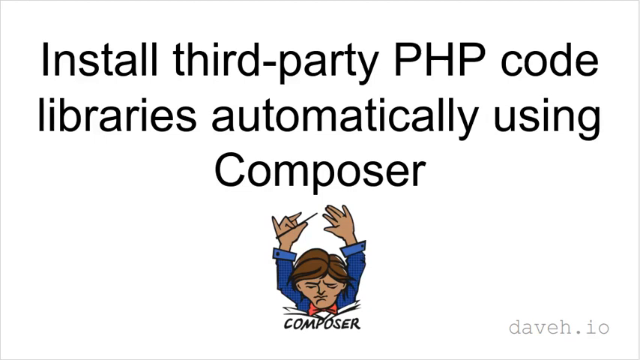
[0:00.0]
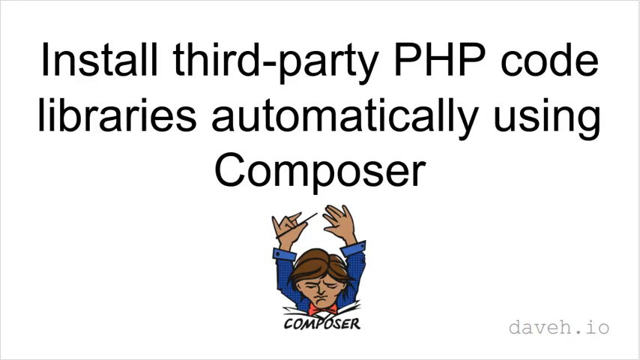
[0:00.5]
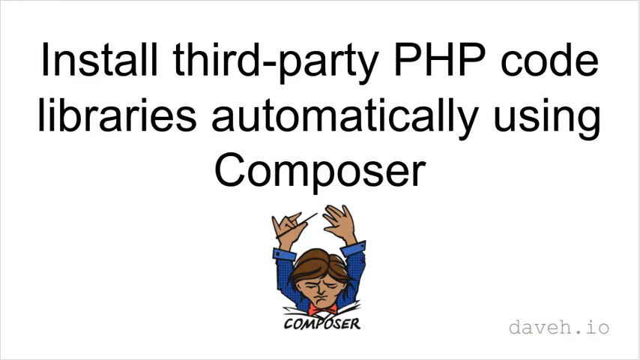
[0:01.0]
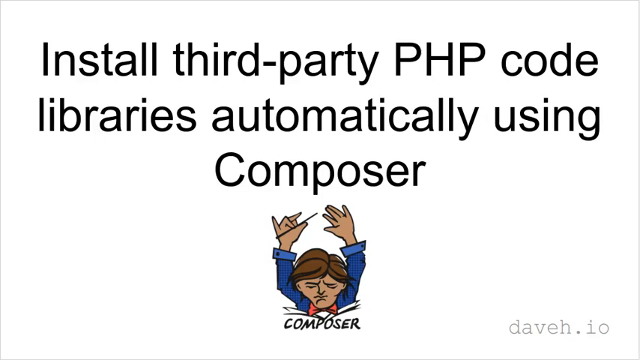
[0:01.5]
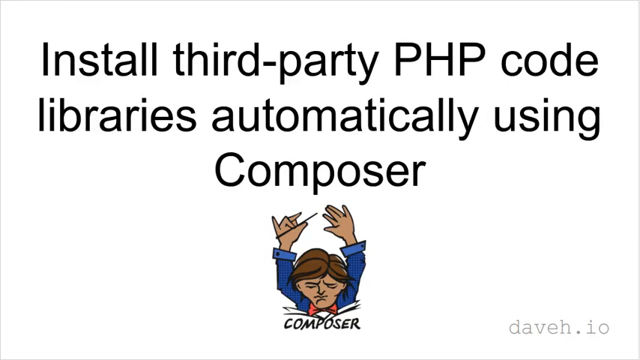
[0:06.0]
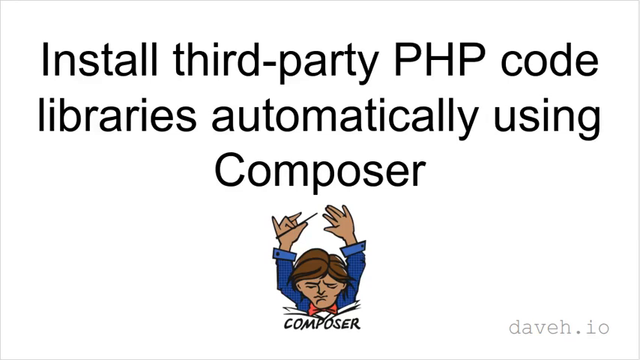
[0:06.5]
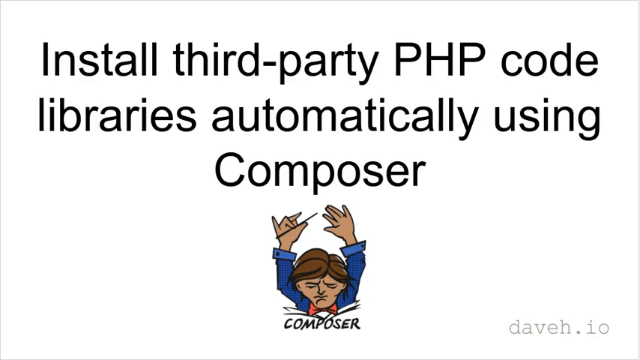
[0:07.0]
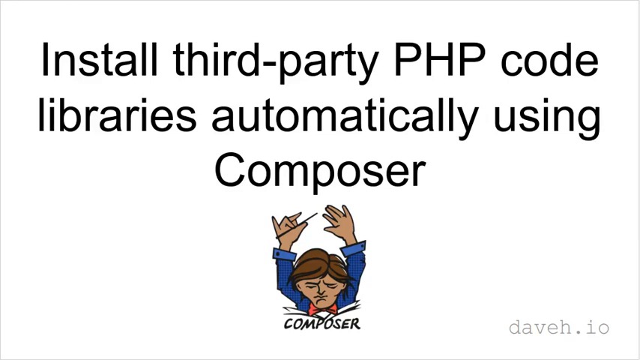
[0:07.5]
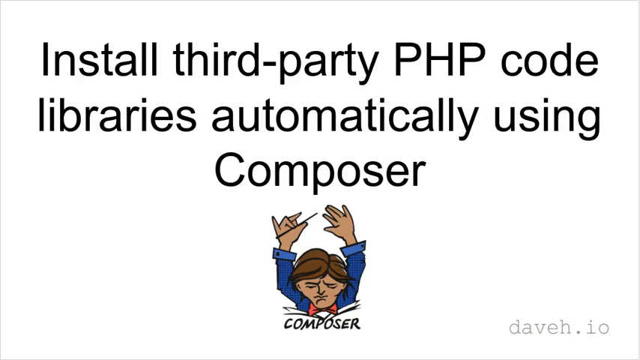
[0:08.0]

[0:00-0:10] A cartoon figure that looks like a conductor holds one of those small batons used for timing in his right hand, and underneath it says "Composer". On a white background, text above reads "install third-party PHP code libraries automatically using Composer", and below it says "daveh.io". Nothing changes on this screen; it just shows the picture. The figure has brown hair and tan skin, looks unhappy, and wears blue sleeves and a red bow tie.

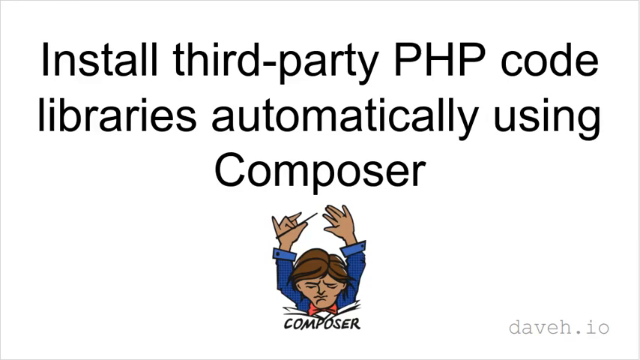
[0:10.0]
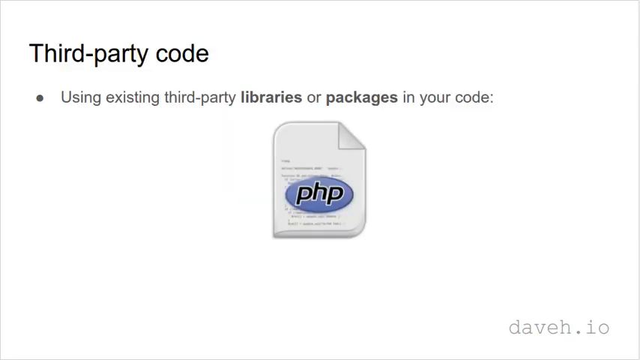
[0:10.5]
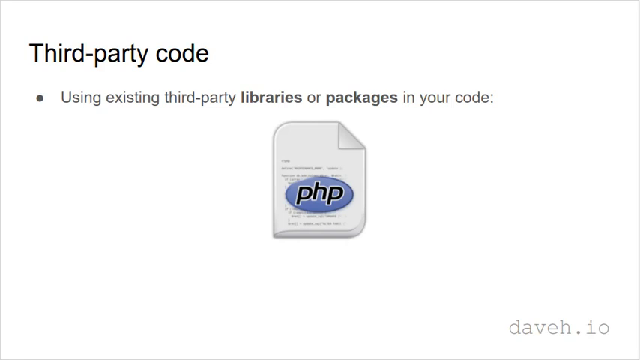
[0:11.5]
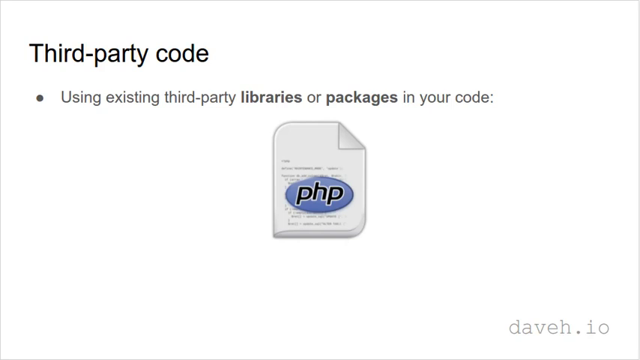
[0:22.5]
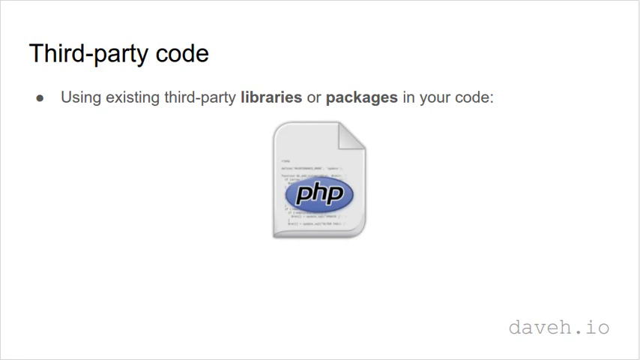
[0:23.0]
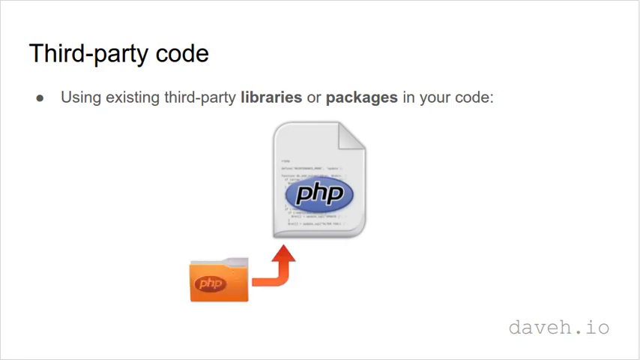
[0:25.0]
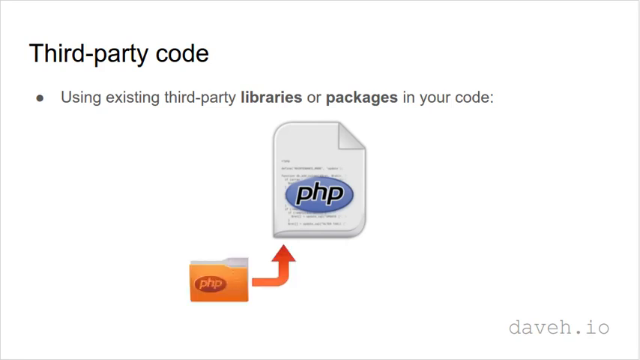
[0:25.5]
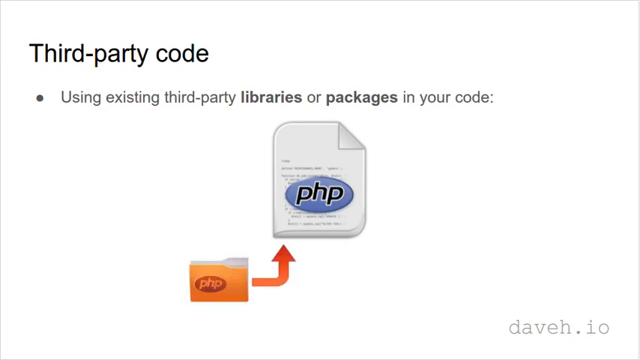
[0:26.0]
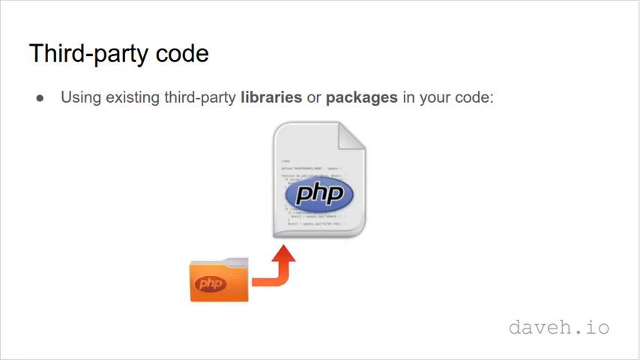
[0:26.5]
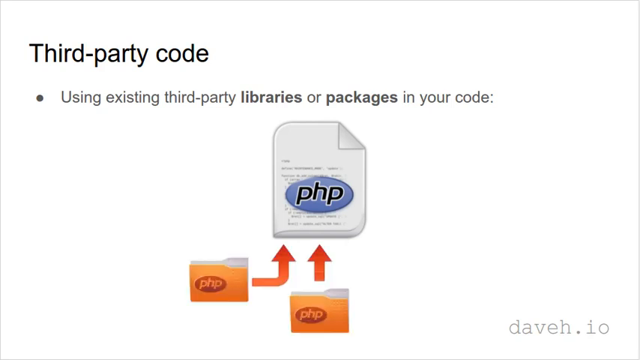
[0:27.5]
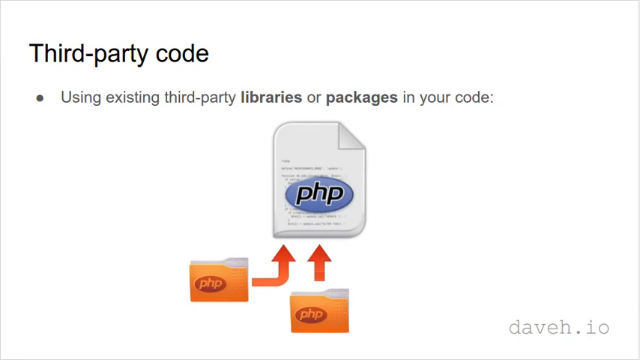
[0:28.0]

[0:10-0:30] The first page says "install third-party PHP code libraries automatically using Composer". The screen then switches to what looks like a cartoon document with a purple circle in the middle containing the letters PHP in black outlined in white. Text reads "third-party code" with a bullet point: "using existing third-party libraries or packages in your code". At the bottom of the slide it says "daveh.io". A file picture pops up diagonally below and to the left; it looks like a file-cabinet file, kind of goldenrod in color, with "PHP" in goldenrod inside a red circle. A bent arrow goes from outside the file up past its top, pointing to the original PHP document. Another file pops up underneath it, and then another to the right of that one.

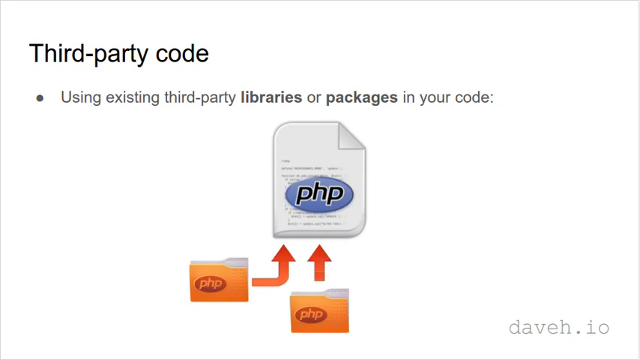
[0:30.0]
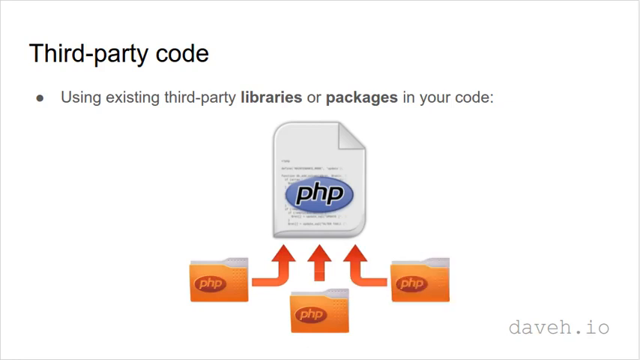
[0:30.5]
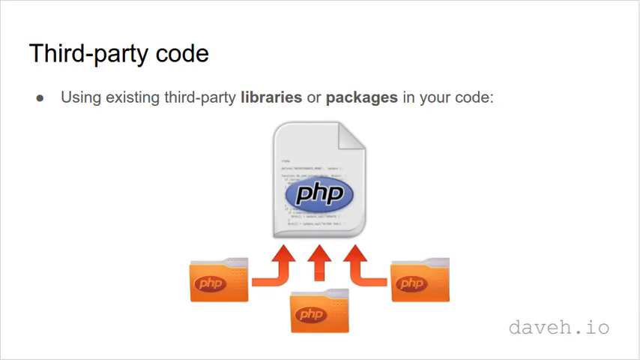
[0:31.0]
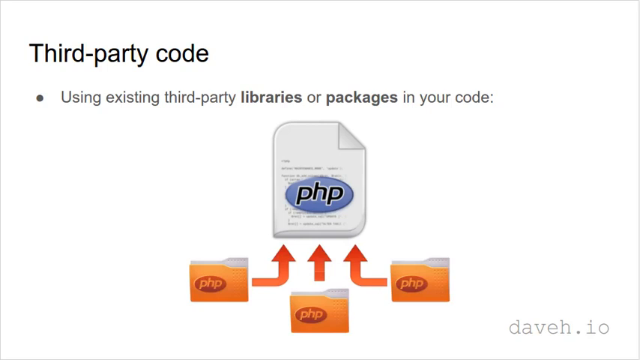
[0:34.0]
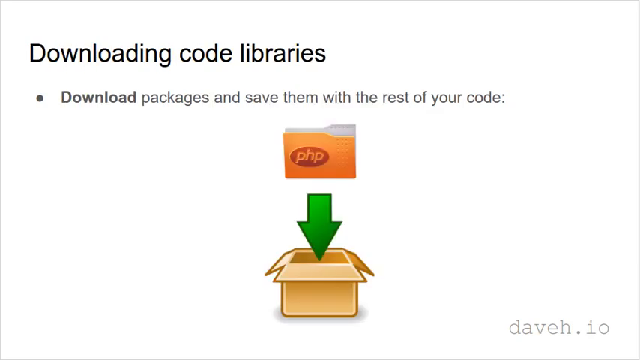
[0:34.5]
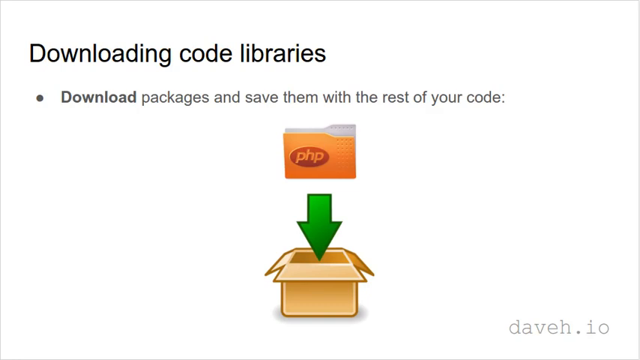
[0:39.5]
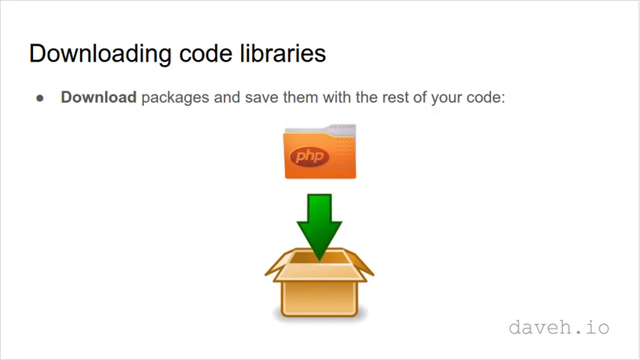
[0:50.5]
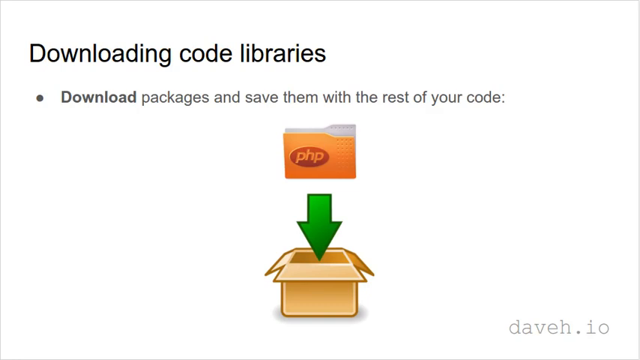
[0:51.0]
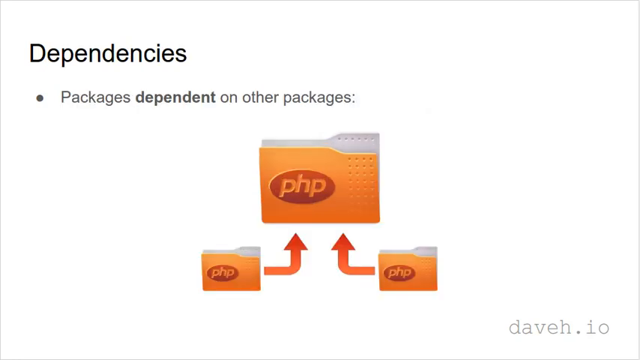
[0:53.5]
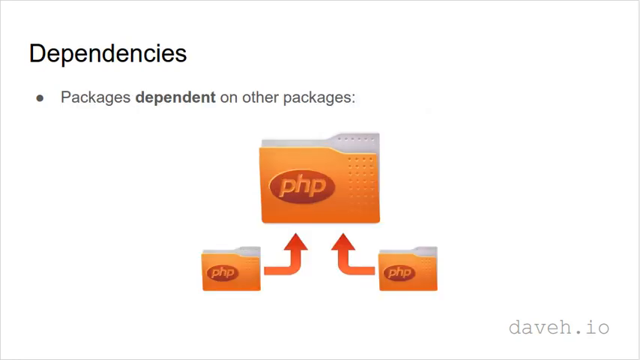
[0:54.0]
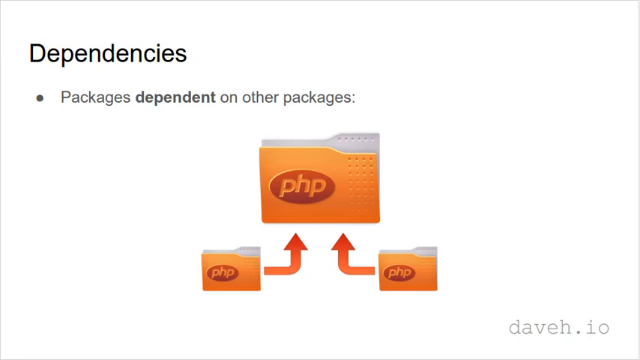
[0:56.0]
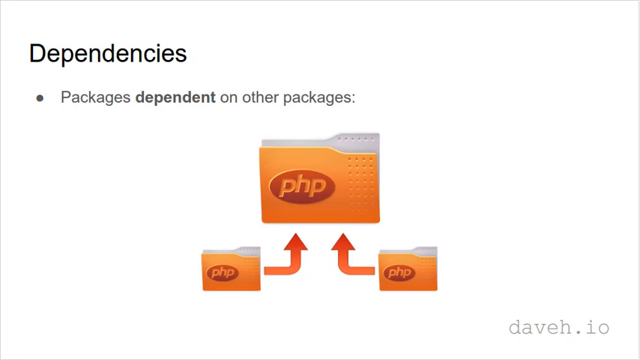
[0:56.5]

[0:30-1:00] The video shows how to use a program called Composer to add third-party code, and "daveh.io" is shown as the maker. A document appears with three different files going into it, along with the text "third-party code" and "using existing third-party libraries or packages in your code". Next, a file with PHP on it appears with a green arrow going down into a box whose top is open, and the text reads "downloading code libraries" and "download packages and save them with the rest of your code". The picture stays without any action for a while. The screen then changes to the word "dependencies" with the bullet point "packages dependent on other packages". A big PHP file appears with two small ones below it on the diagonals, each with a red arrow pointing up to the main file.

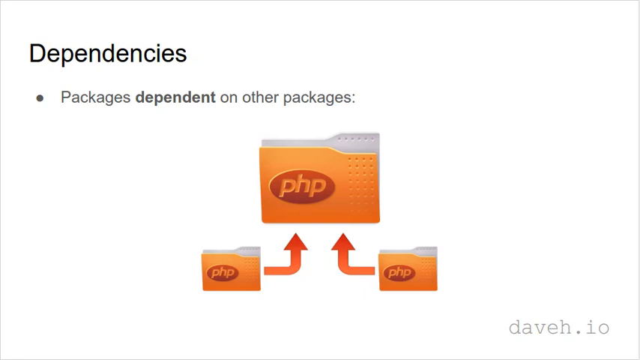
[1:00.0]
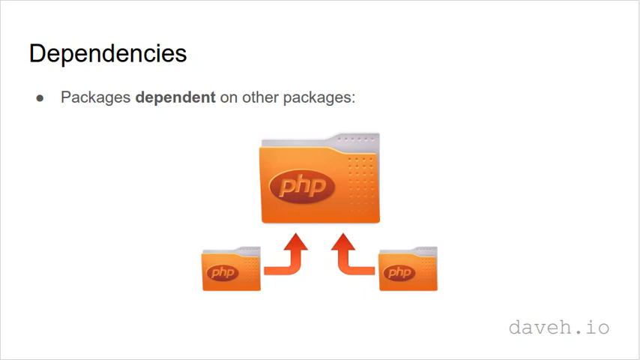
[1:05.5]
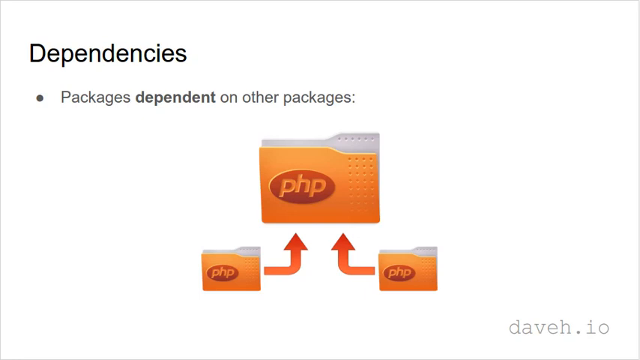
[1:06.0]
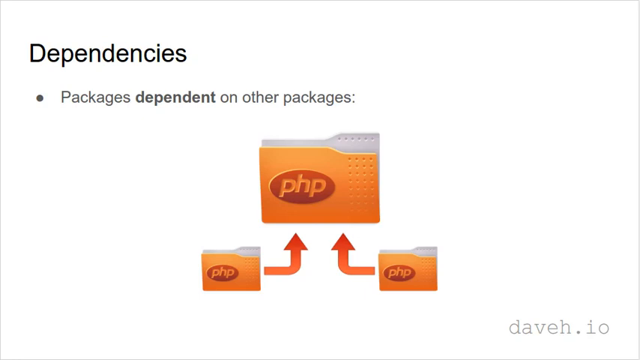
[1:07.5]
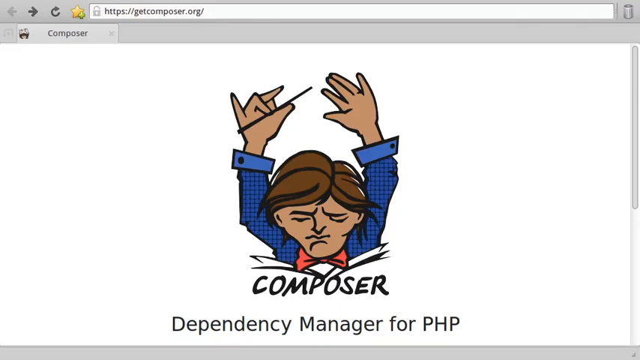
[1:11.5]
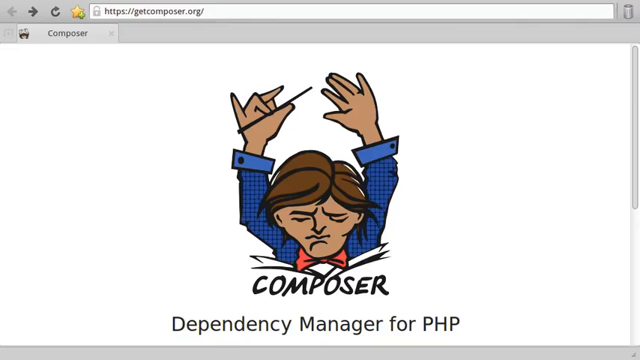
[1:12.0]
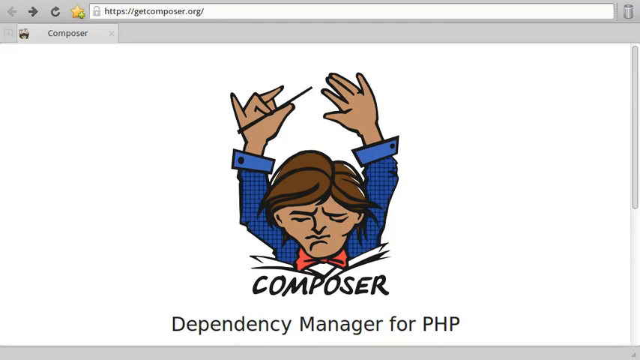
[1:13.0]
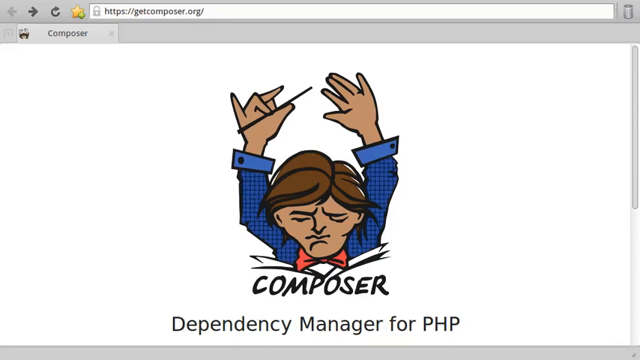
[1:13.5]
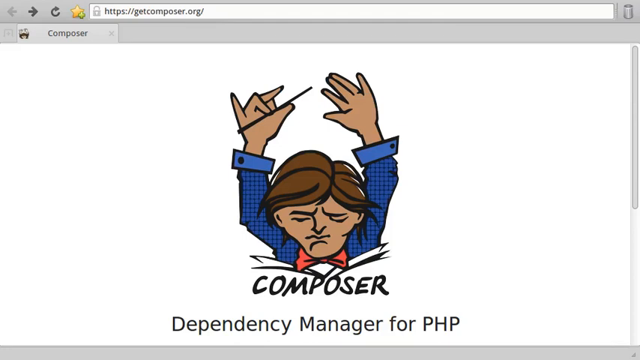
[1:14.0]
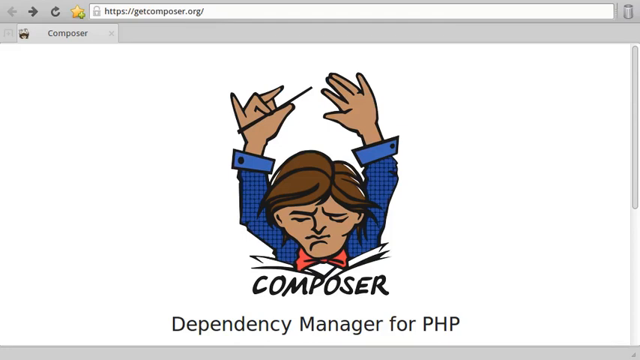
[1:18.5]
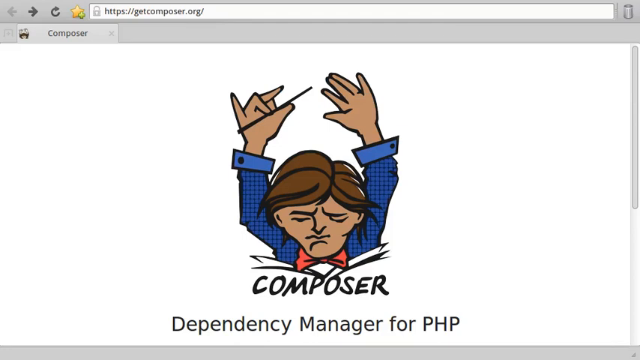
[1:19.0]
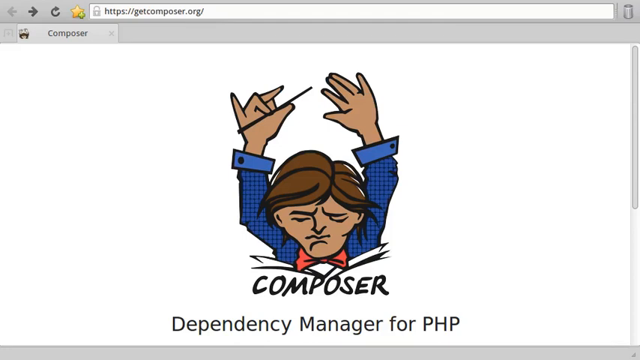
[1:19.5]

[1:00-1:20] The dependencies screen reads "packages dependent on other packages" and shows a goldenrod file folder with PHP on it that appears to have a white back, with two smaller files below it on the diagonals and red arrows. "daveh.io" is below it. Nothing changes for a while. Then a Composer screen appears with a cartoon of a composer holding a small baton and the text "Dependency Manager for PHP". The composer has brown hair and tan skin and wears a blue button-down shirt with dark blue stripes and a red bow tie. He seems to be looking at some music, with the baton up in the air.